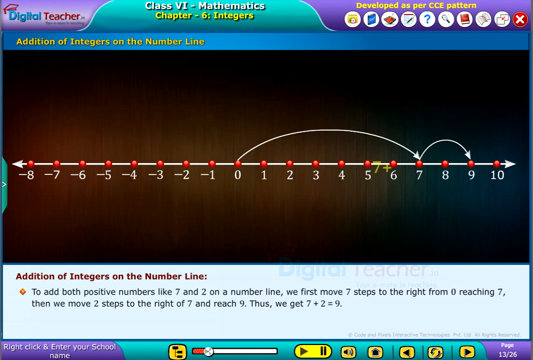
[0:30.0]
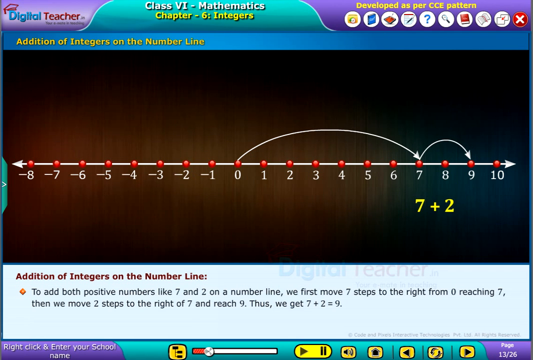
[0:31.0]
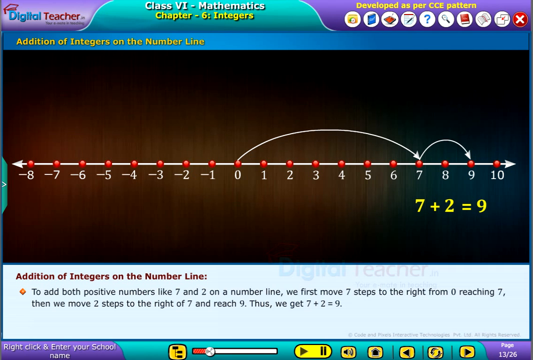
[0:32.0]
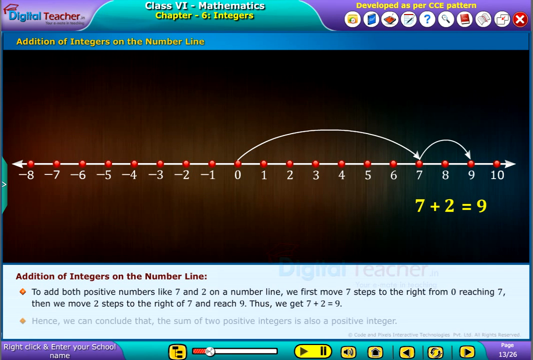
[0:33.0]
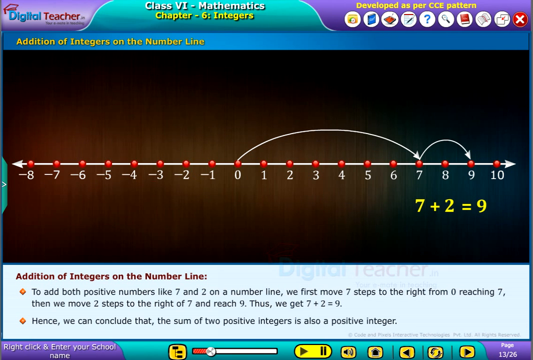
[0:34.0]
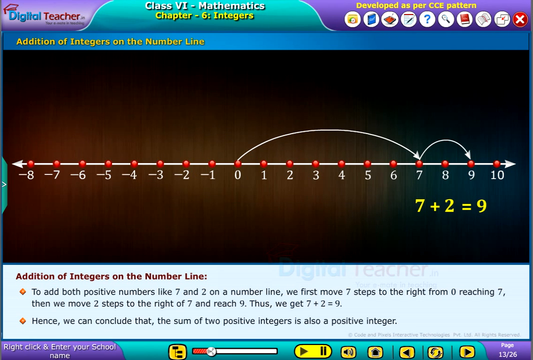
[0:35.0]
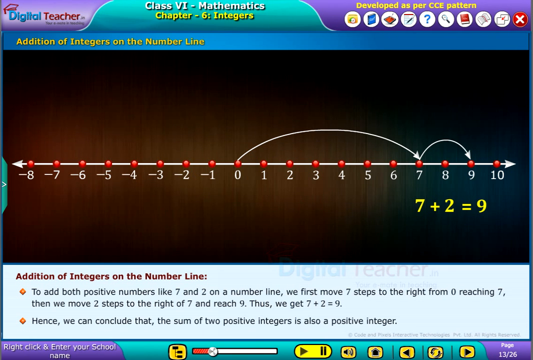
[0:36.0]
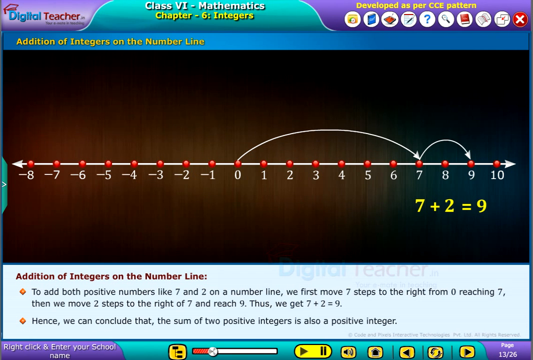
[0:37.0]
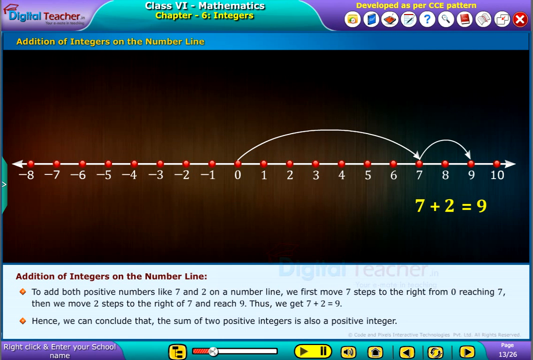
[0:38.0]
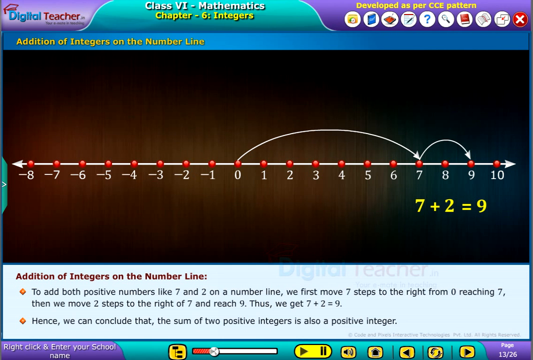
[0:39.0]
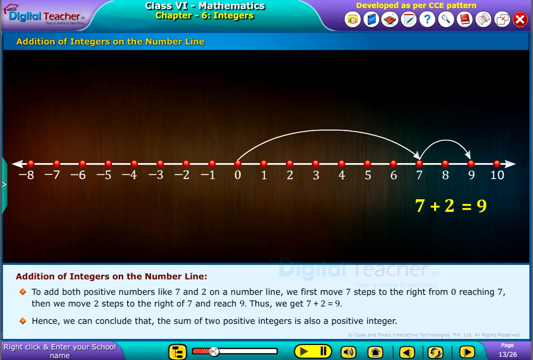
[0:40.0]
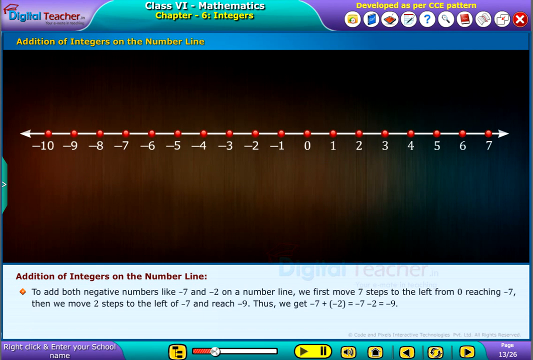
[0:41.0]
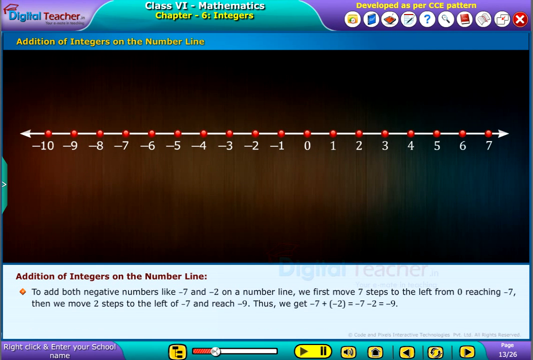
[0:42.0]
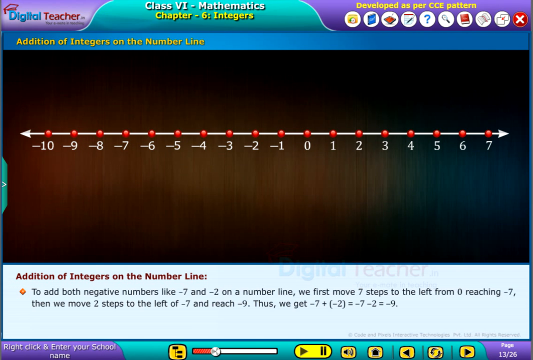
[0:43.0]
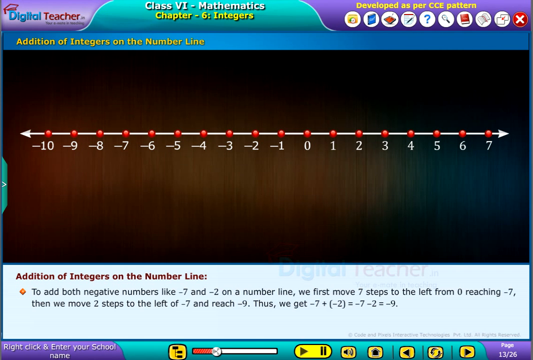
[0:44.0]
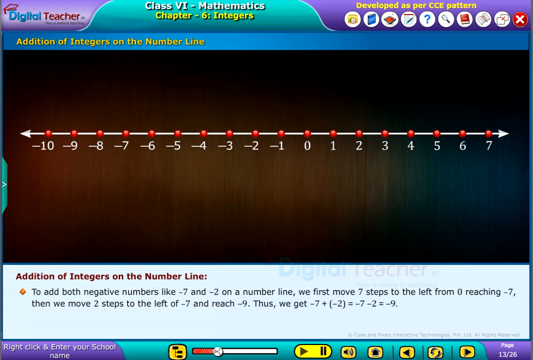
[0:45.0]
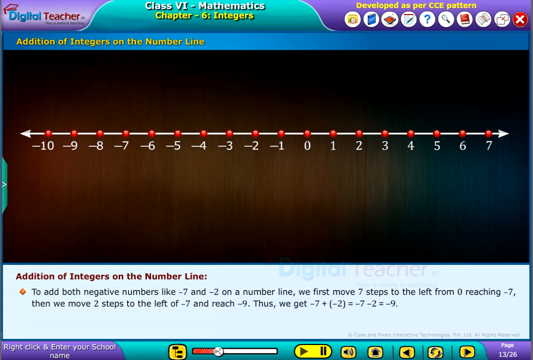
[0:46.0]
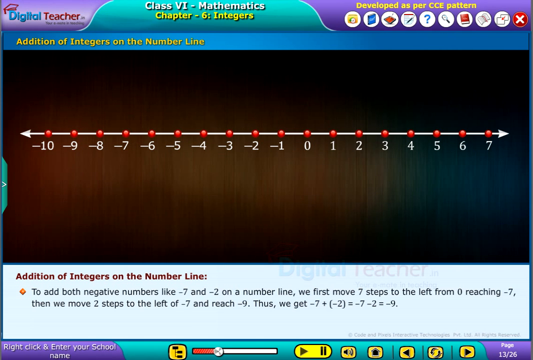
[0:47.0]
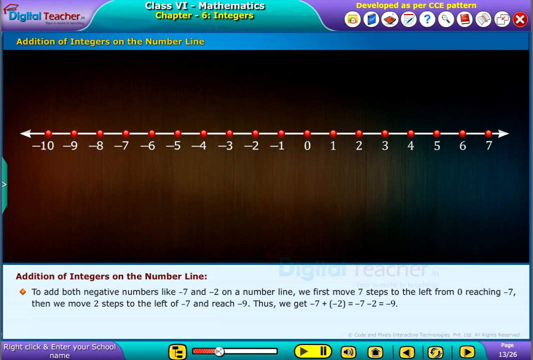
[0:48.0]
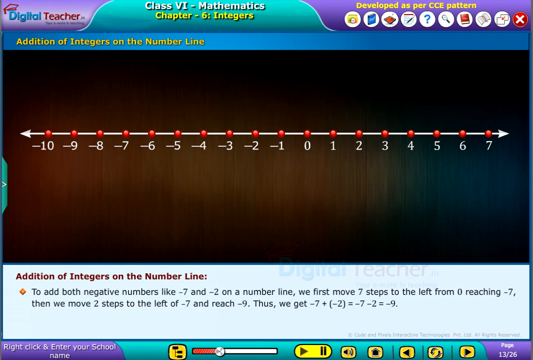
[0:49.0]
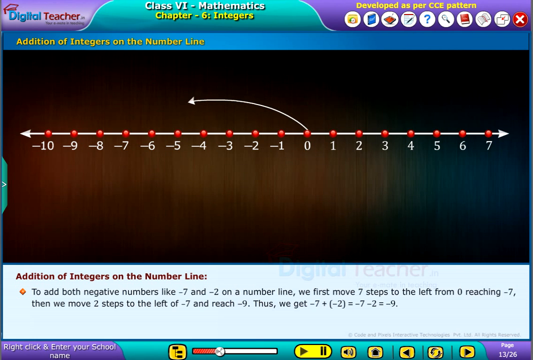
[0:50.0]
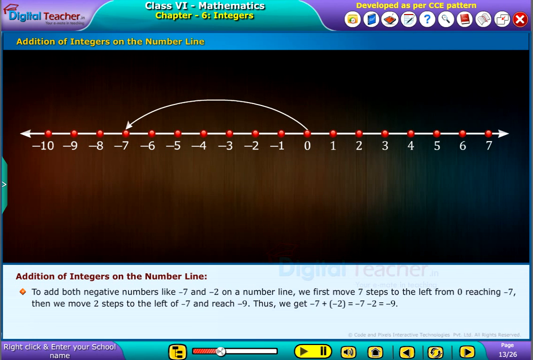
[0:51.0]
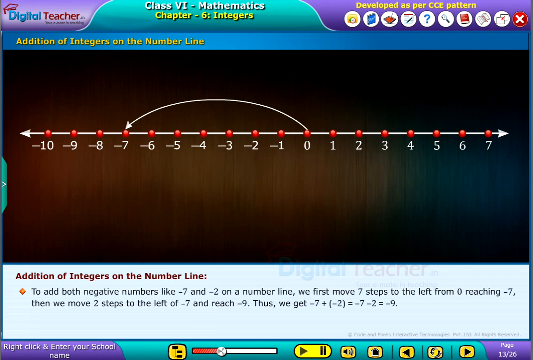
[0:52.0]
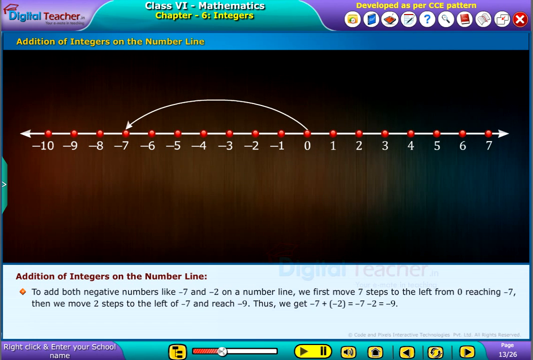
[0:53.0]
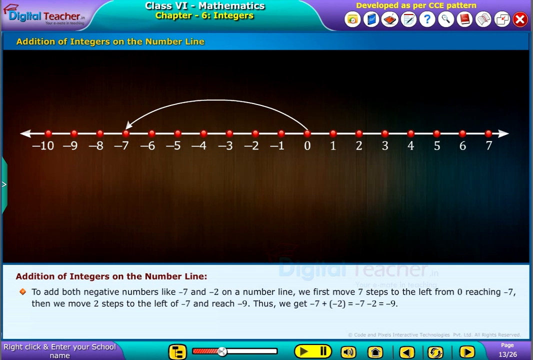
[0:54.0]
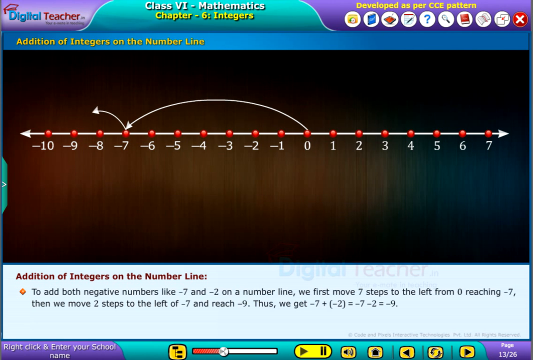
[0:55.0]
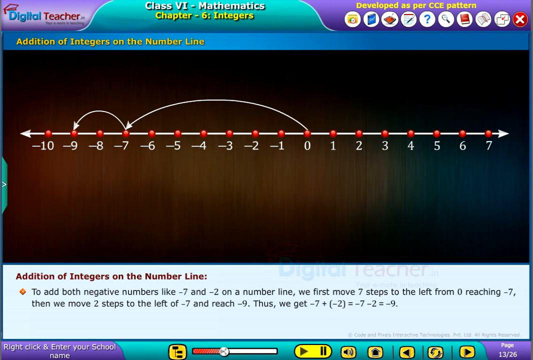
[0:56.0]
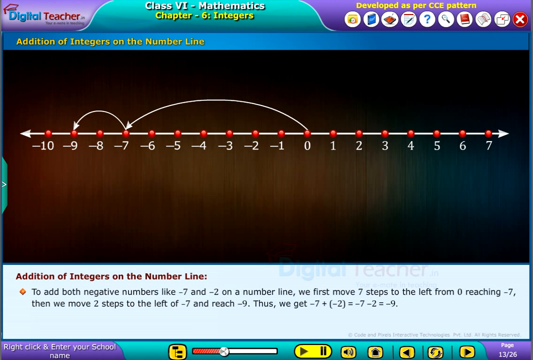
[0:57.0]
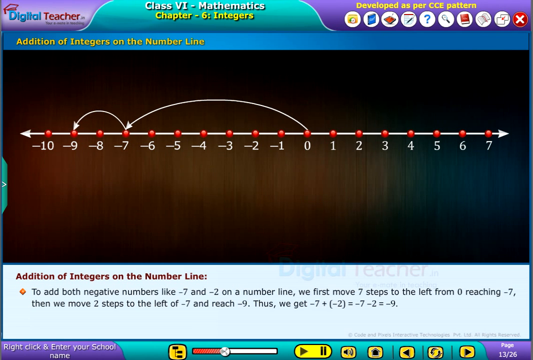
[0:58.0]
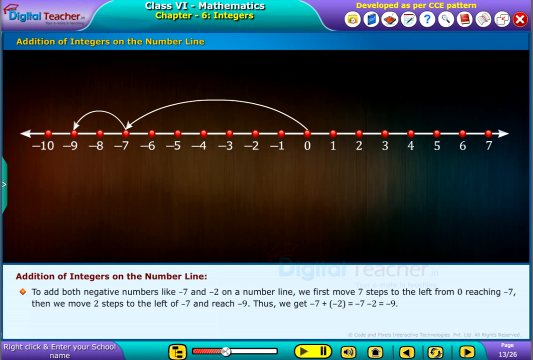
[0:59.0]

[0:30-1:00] With the arrows animated on the number line, yellow text below it reads "7 plus 2 equals 9". The text at the very bottom then shows another bullet point: "hence we can conclude that the sum of two positive integers is also a positive integer". The arrows and everything else disappear except the number line, and a new bullet point replaces the first one: "to add both negative numbers like negative 7 on the number line, we first move 7 steps to the left from 0 reaching negative 7. Then we move 2 steps to the left of negative 7", ending with "Thus, we get negative 7 plus negative 2 equals negative 7 minus 2 equals negative 9." The number line updates accordingly, with arrows going from 0 to negative 7 and on to negative 9.